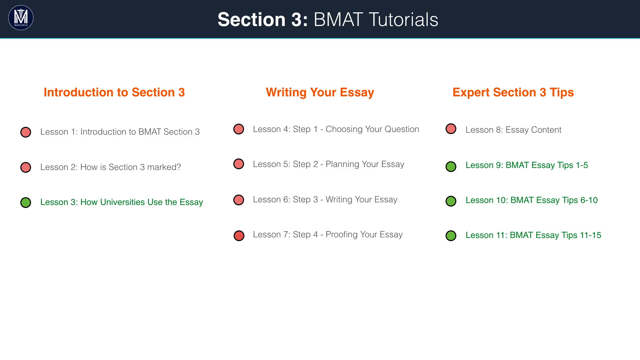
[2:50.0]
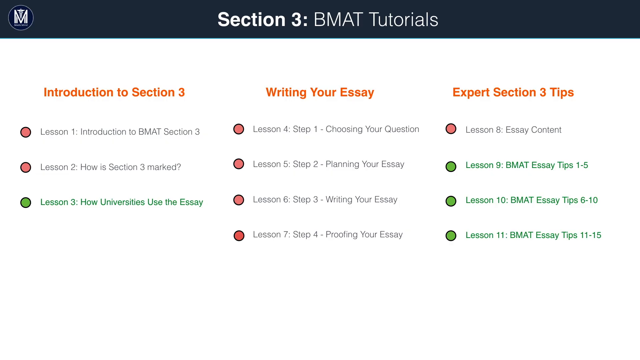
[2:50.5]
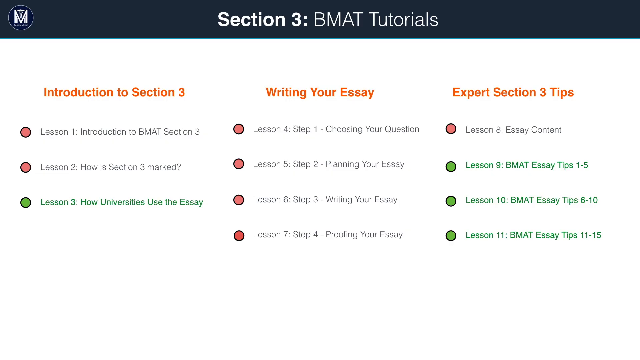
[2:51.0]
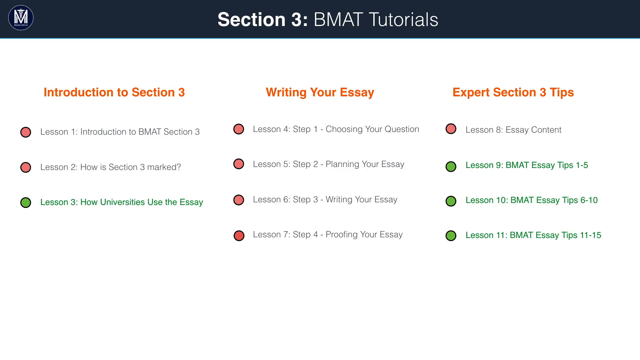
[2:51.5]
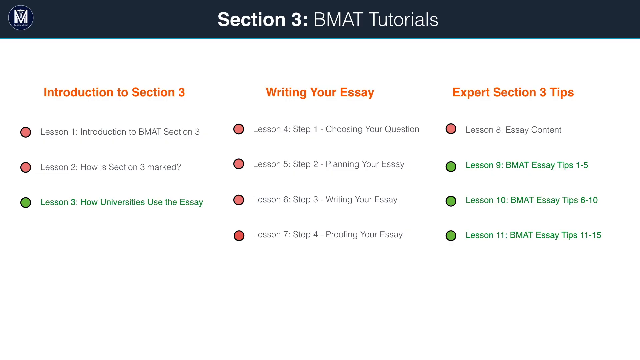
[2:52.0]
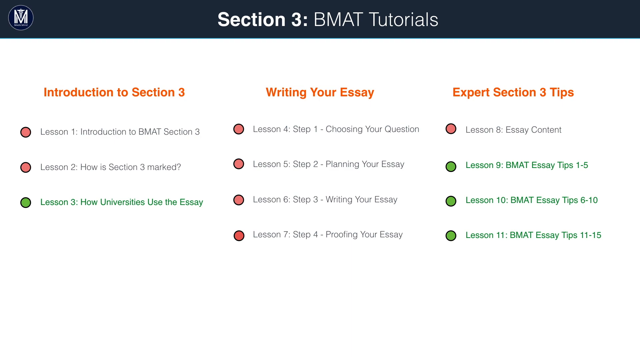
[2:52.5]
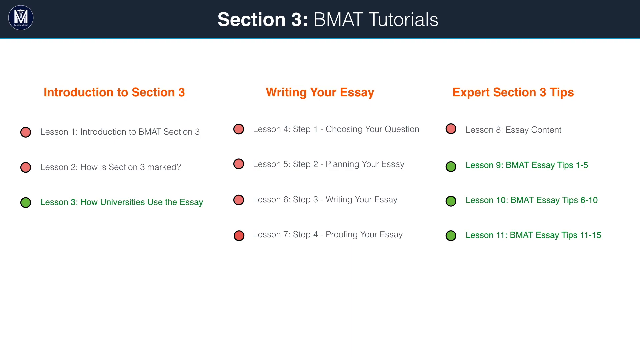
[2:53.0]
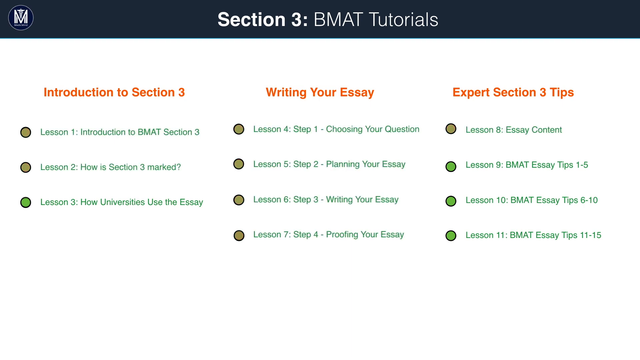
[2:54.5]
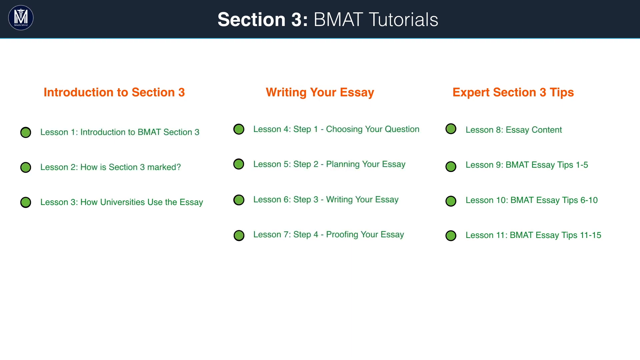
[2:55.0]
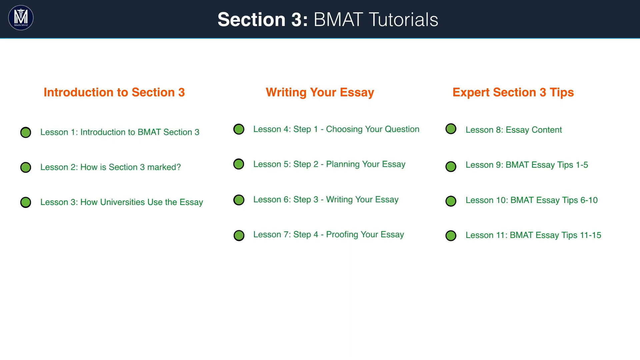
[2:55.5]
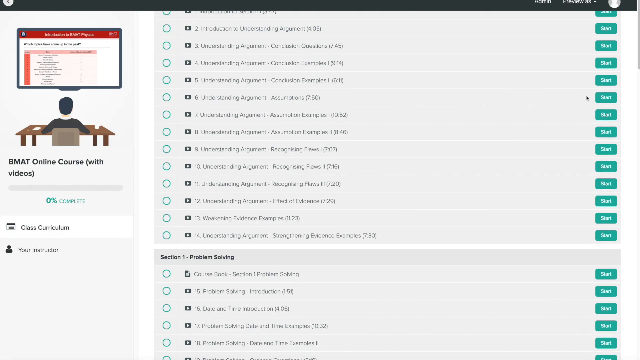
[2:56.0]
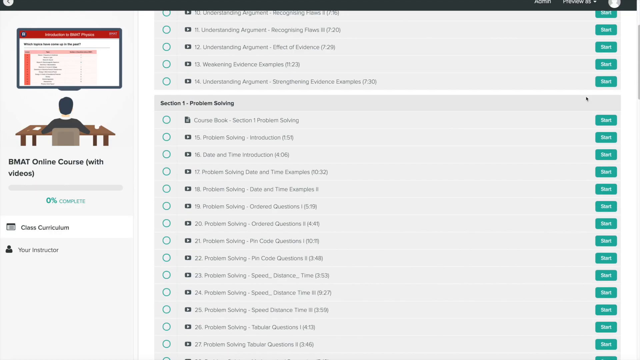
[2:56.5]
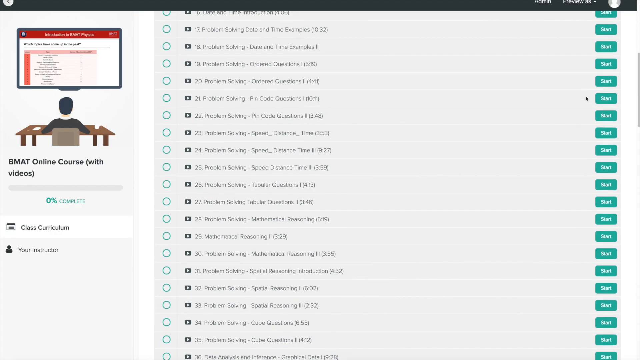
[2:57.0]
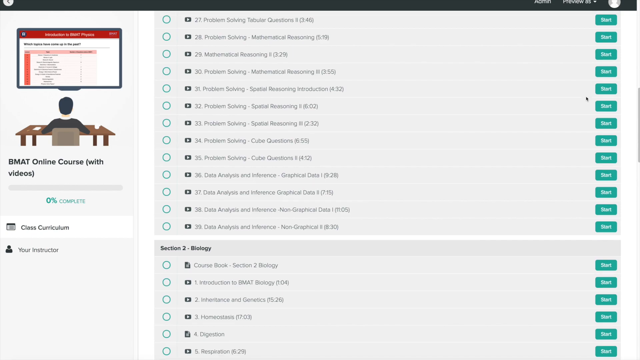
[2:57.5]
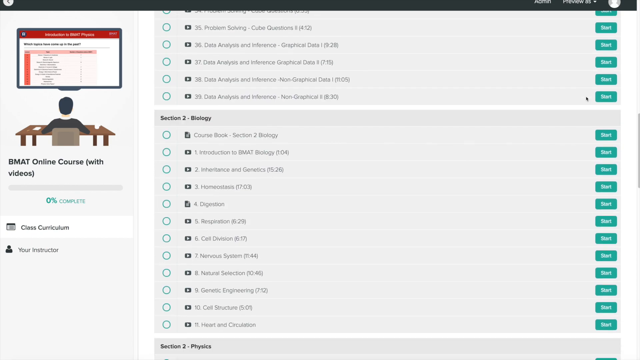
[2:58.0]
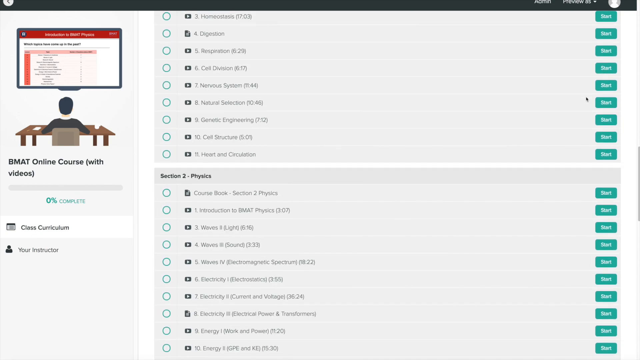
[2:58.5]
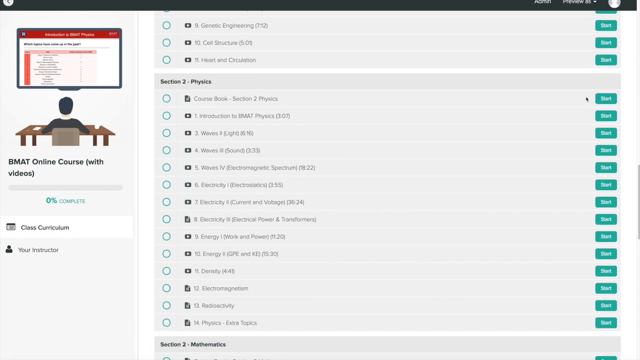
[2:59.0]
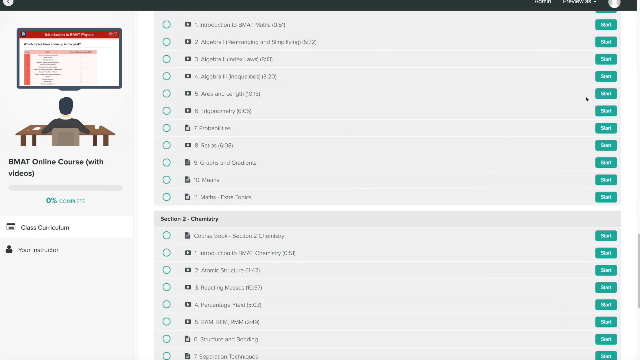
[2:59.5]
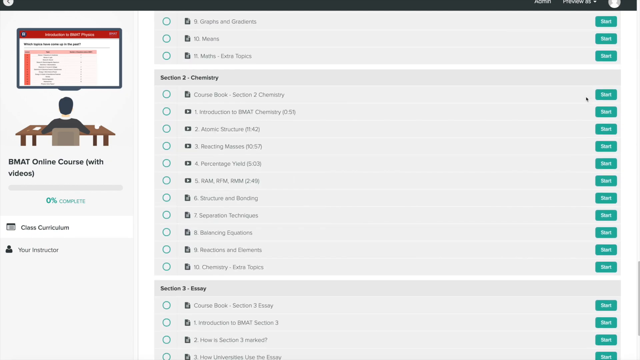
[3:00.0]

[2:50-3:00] A new image appears with a dark gray or black overlay at the very top reading "Section 3, BMAT Tutorials". Underneath are three sections written in orange: "Introduction to Section 3", "Writing Your Essay" and "Export Section 3 Tips". Below each section are three to four lesson options, some highlighted in green and others in red. It quickly transitions to a new page presenting many different lesson plans and coursework options, each with a start option next to it, and the page scrolls down through the course options before the video concludes.